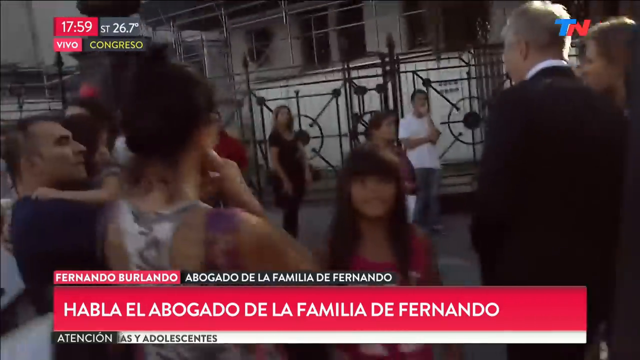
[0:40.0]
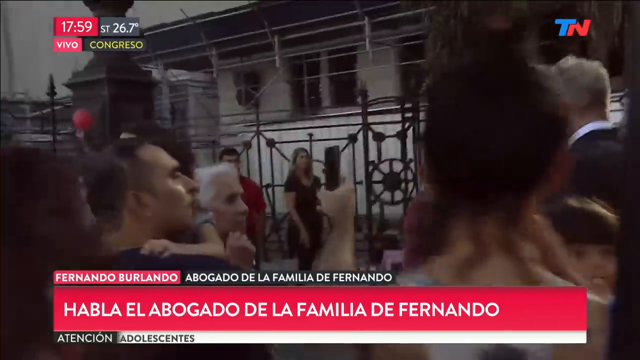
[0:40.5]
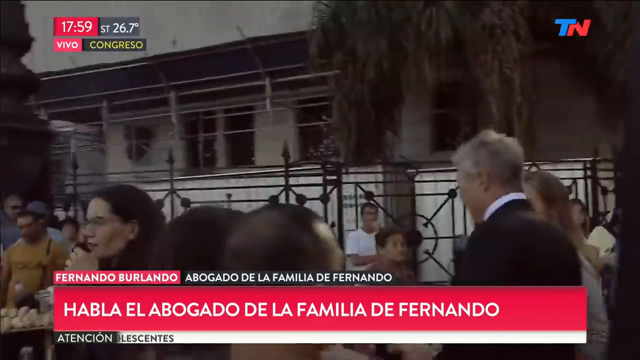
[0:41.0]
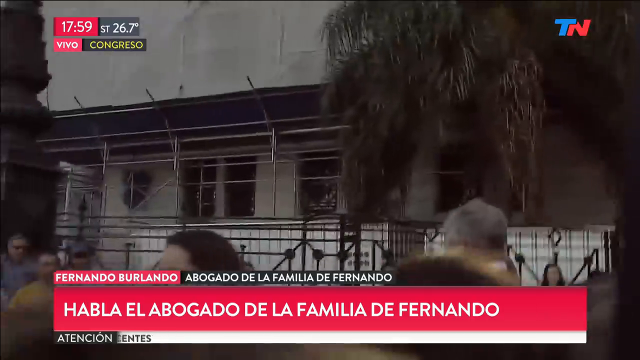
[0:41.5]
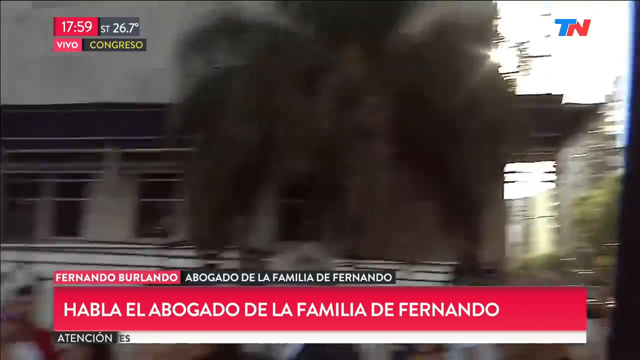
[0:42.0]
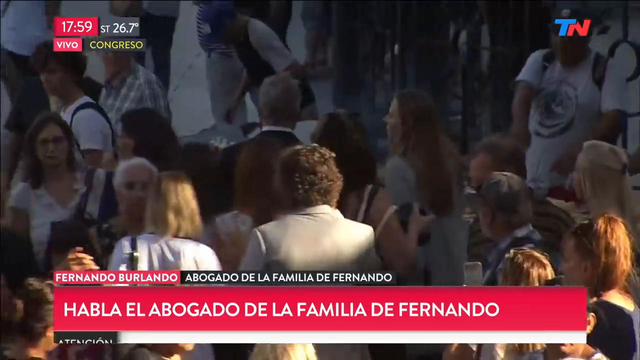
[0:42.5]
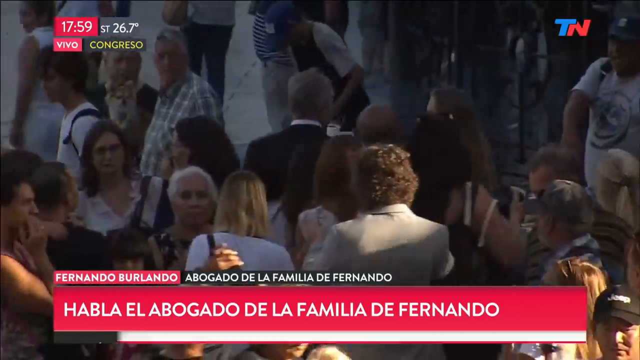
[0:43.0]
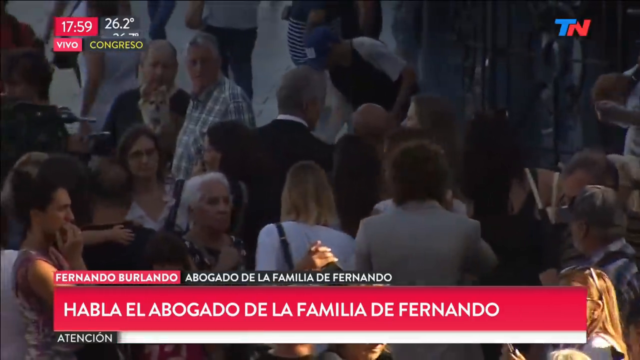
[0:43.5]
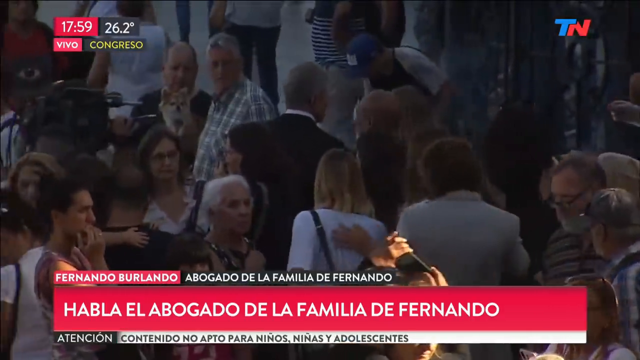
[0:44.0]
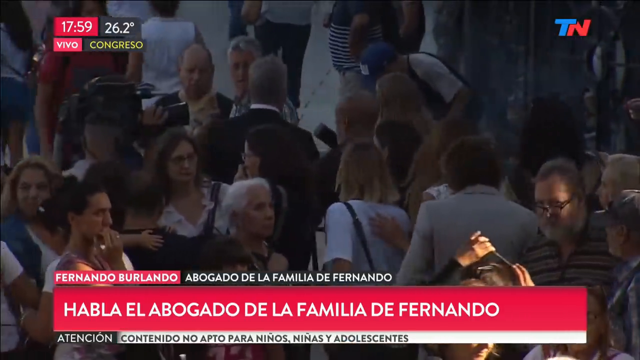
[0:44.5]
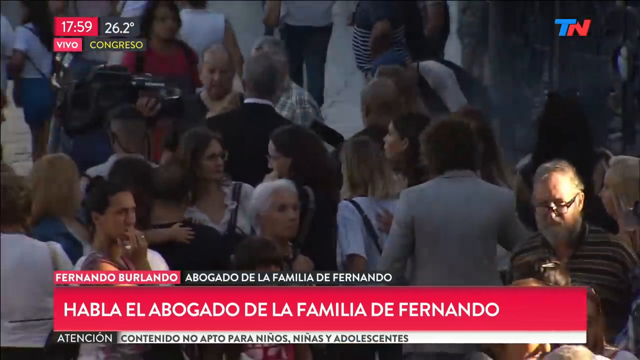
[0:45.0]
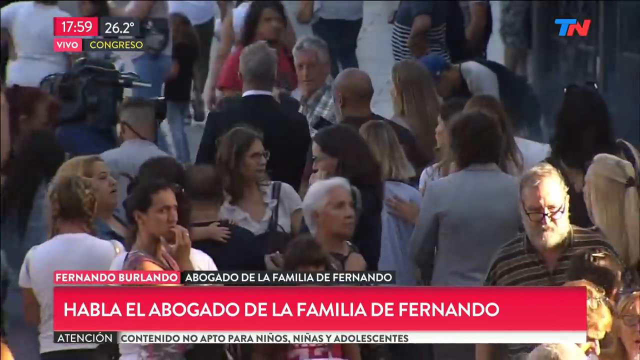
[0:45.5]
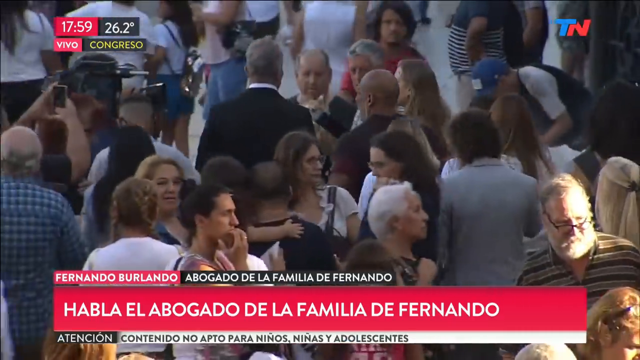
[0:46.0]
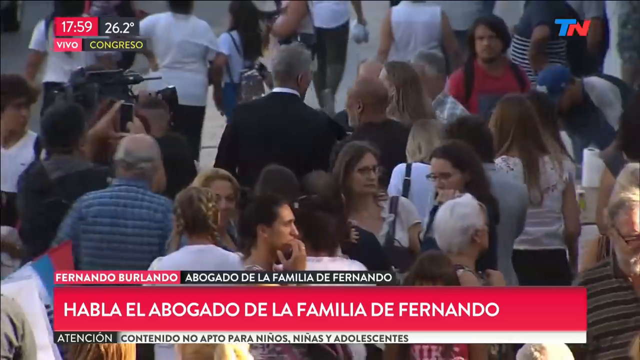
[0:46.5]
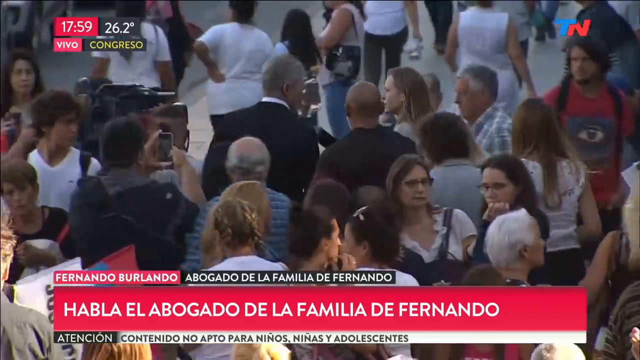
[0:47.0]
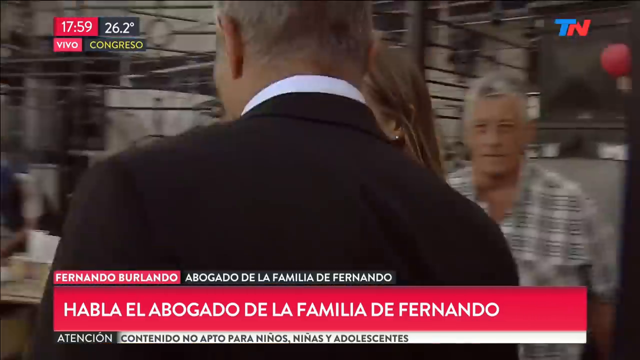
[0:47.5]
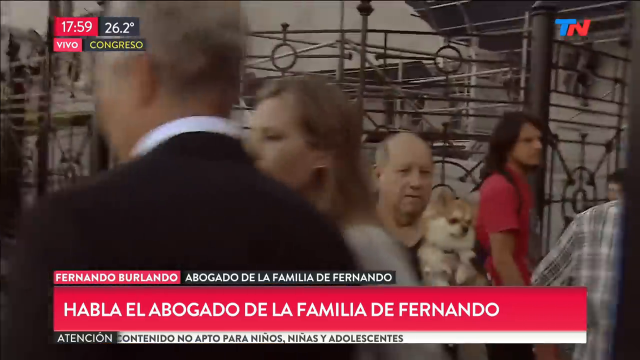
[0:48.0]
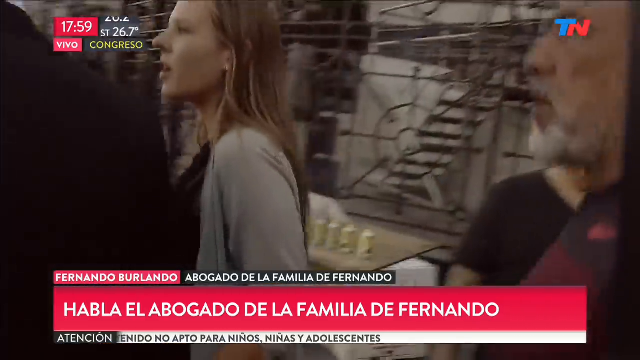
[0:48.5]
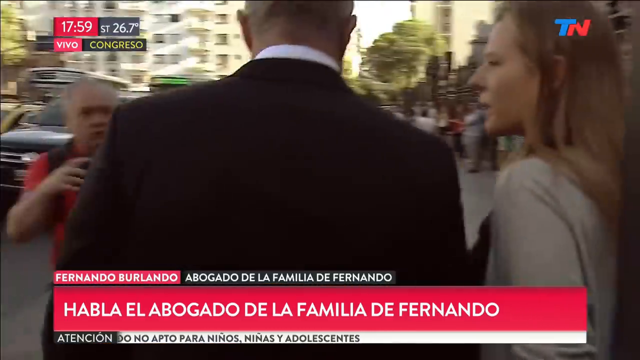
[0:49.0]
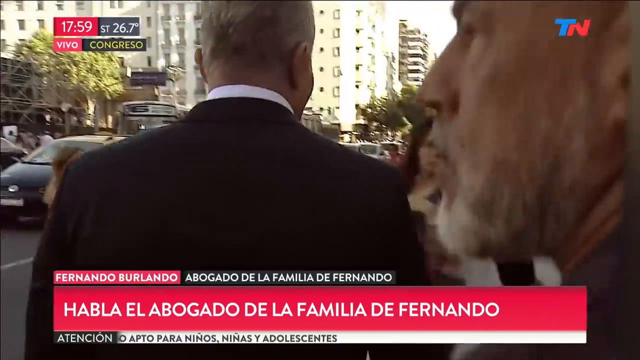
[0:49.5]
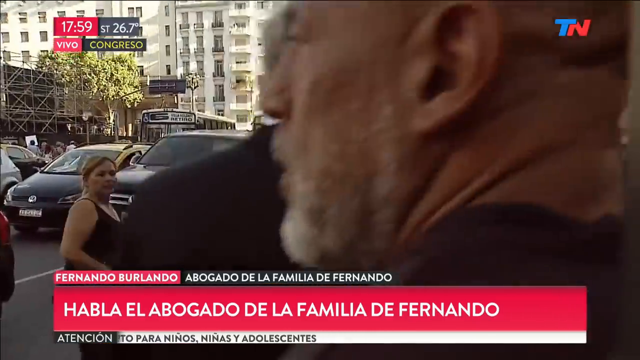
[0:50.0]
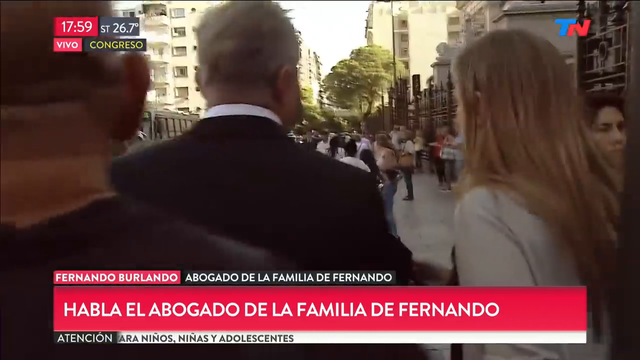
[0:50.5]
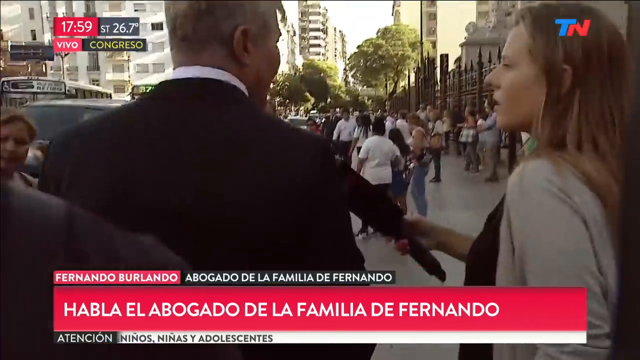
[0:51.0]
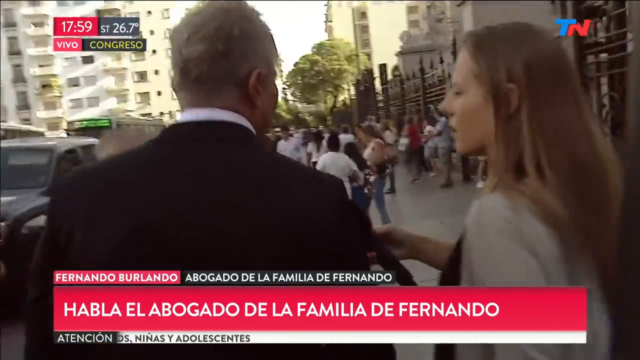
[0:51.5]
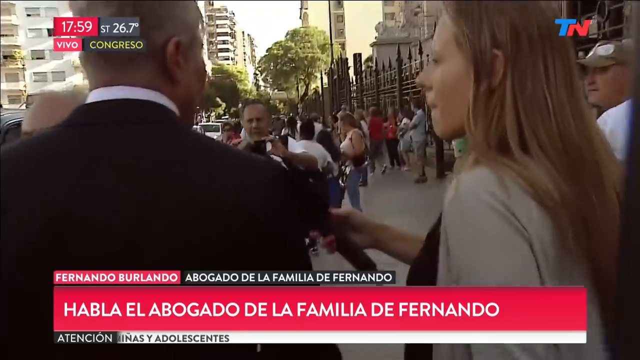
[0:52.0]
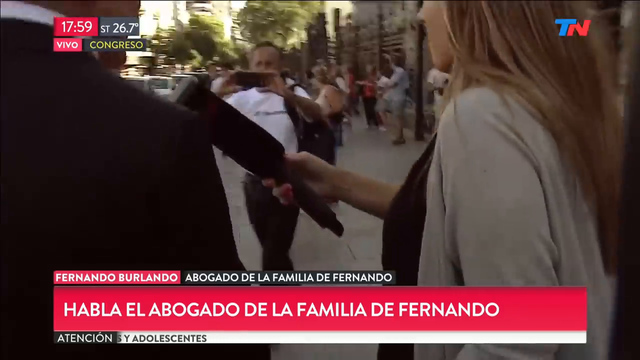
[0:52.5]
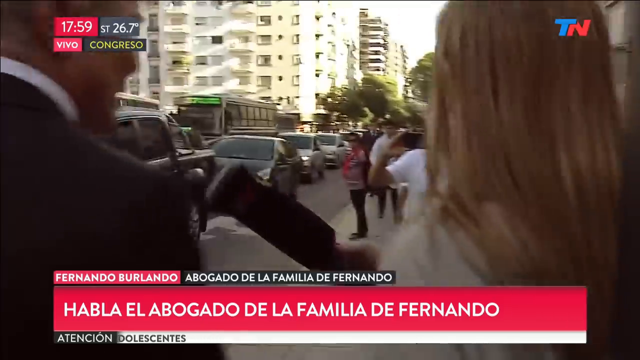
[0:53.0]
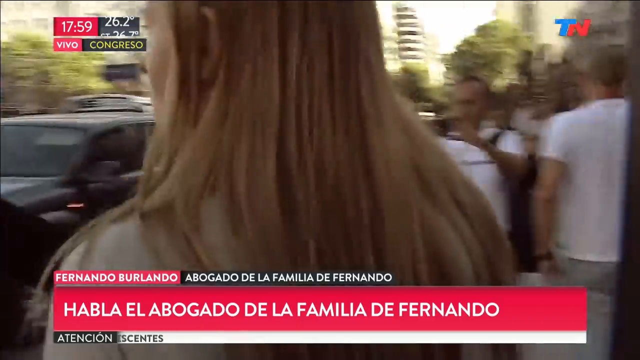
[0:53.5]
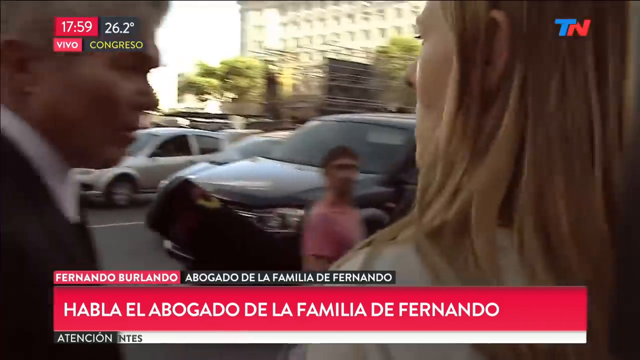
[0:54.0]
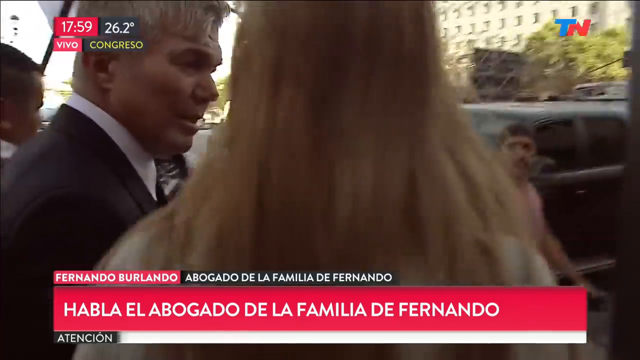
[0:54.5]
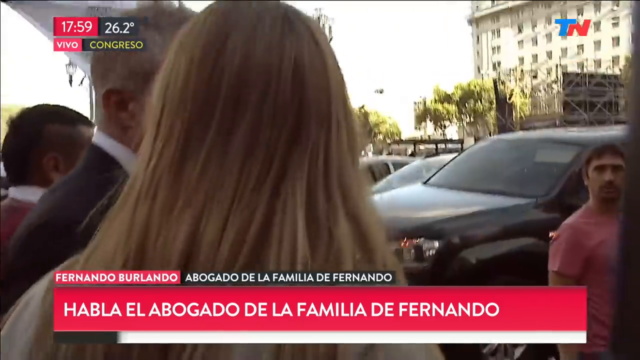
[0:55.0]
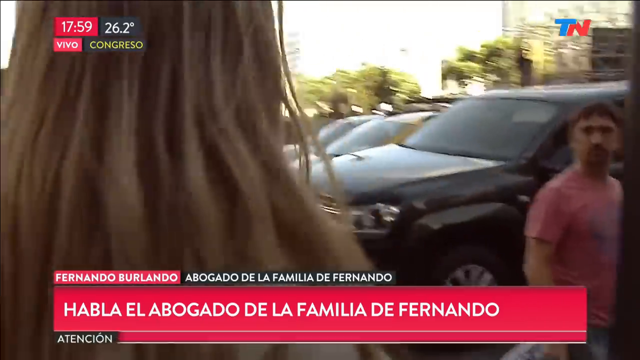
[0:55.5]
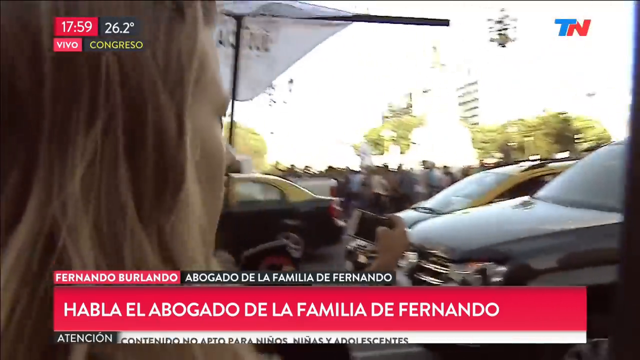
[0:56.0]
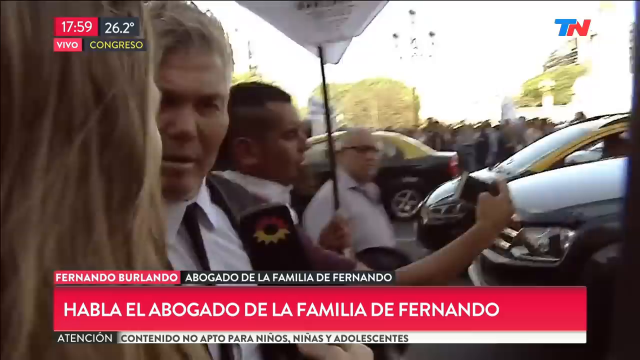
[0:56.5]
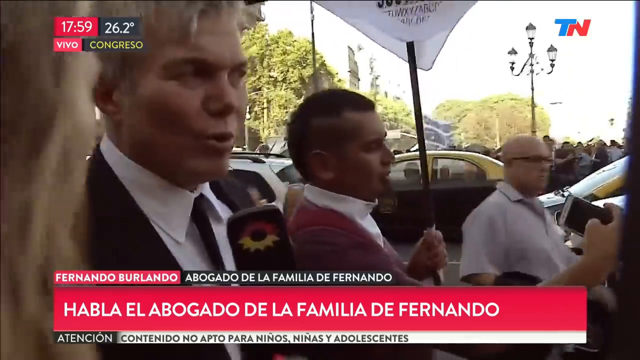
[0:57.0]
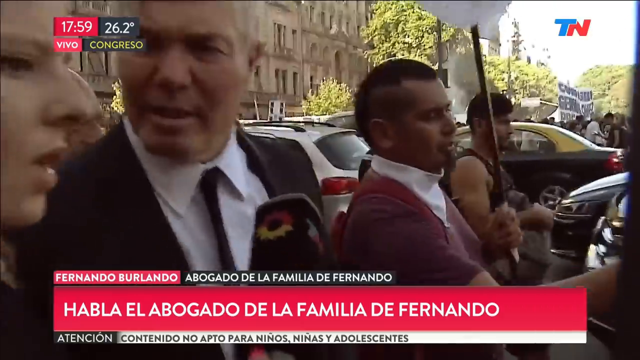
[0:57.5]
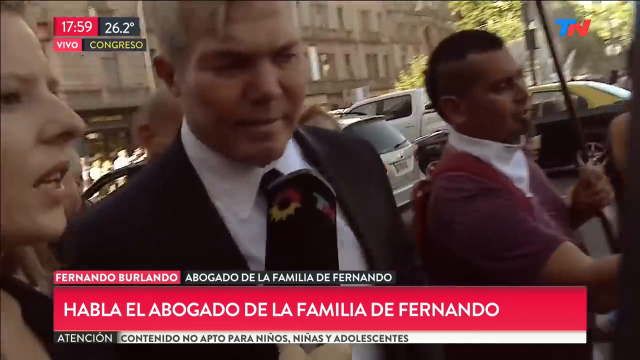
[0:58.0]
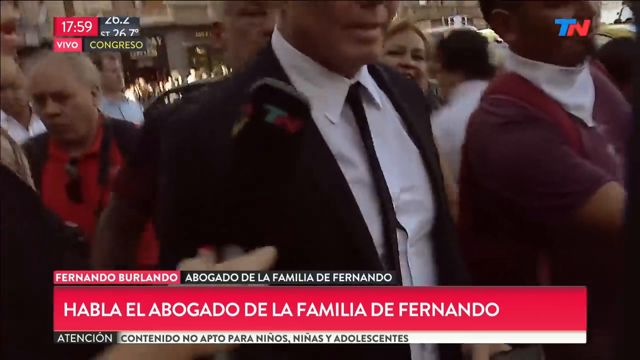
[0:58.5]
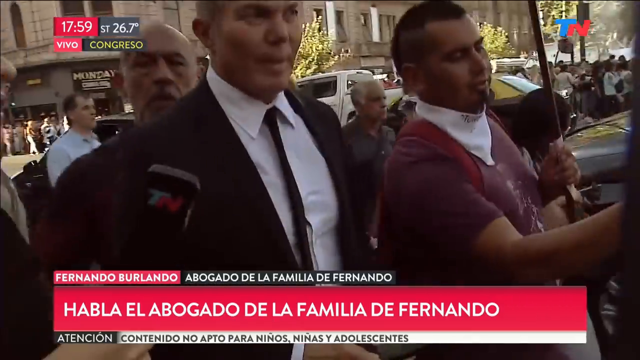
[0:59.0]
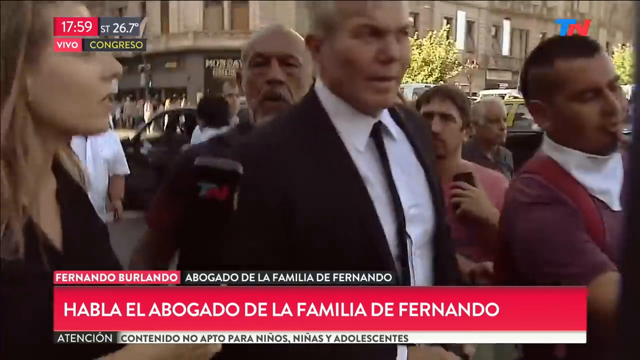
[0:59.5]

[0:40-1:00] A white-skinned man with short light gray hair, wearing a suit, walks through a very packed crowd. The shot looks down from above and behind him as he walks away from the camera, accompanied by a woman and a few other people behind him. The video zooms in closer behind the man's back. The woman holds a microphone as she walks beside him. The crowd becomes less dense, revealing the sidewalk and the buildings behind it, and cars are packed in lines on the streets. The video pans around from behind the man to the front, showing him speaking directly into the microphone. Text at the bottom of the news video reads "HABLA EL ABOGADO DE LA FAMILIA DE FERNANDO." in white on a red background, and a red and blue TN logo appears in the lower right corner.